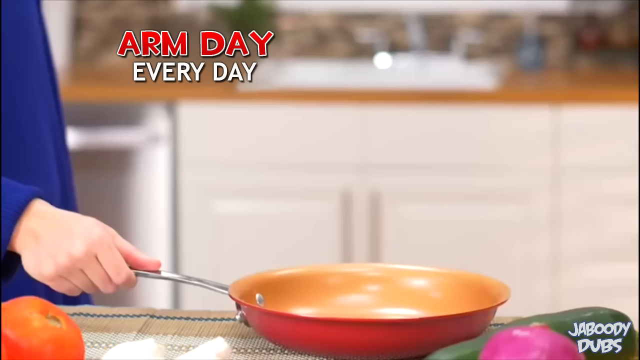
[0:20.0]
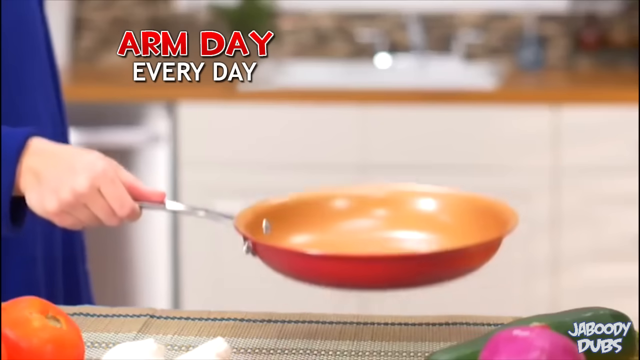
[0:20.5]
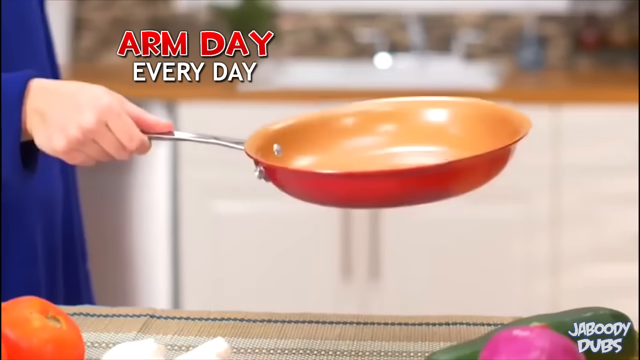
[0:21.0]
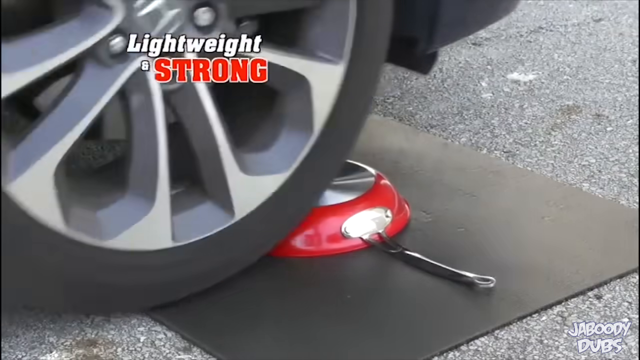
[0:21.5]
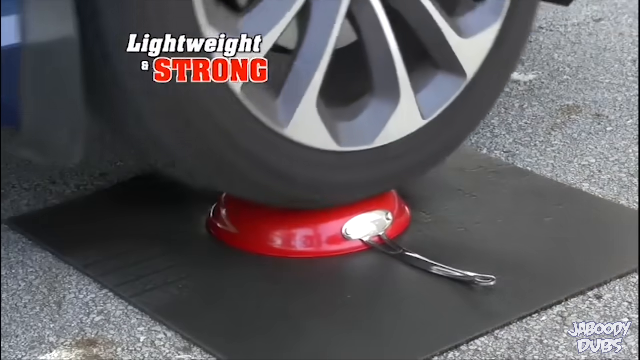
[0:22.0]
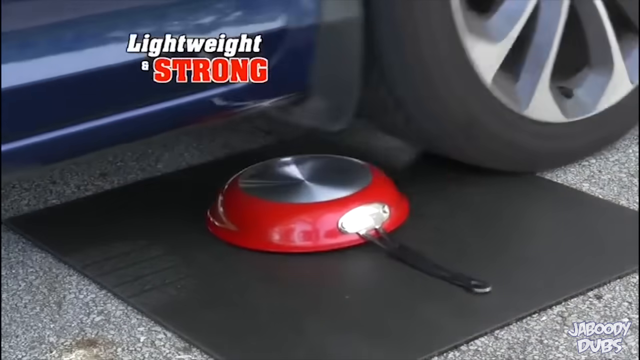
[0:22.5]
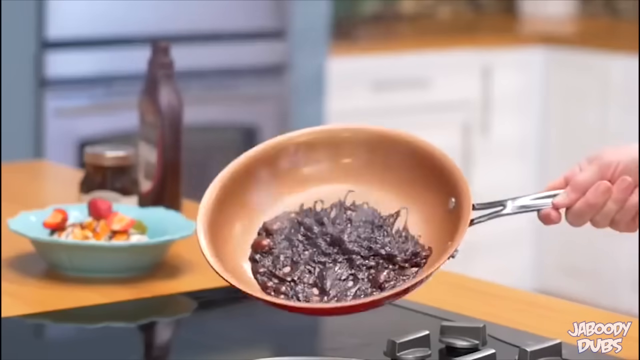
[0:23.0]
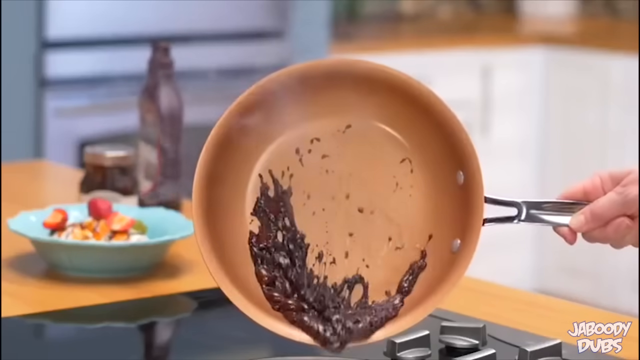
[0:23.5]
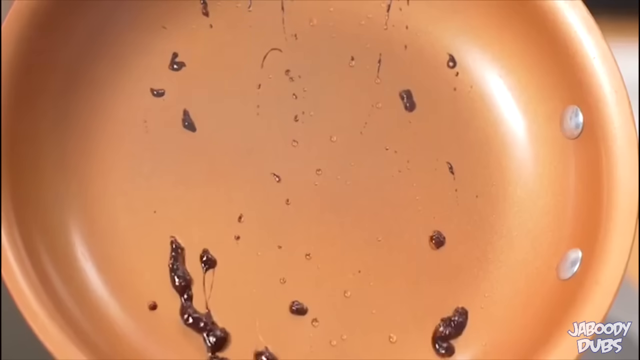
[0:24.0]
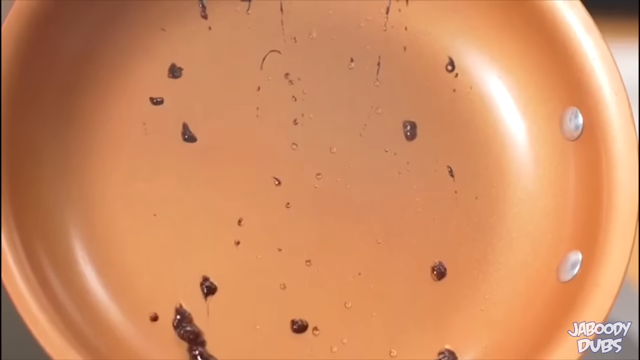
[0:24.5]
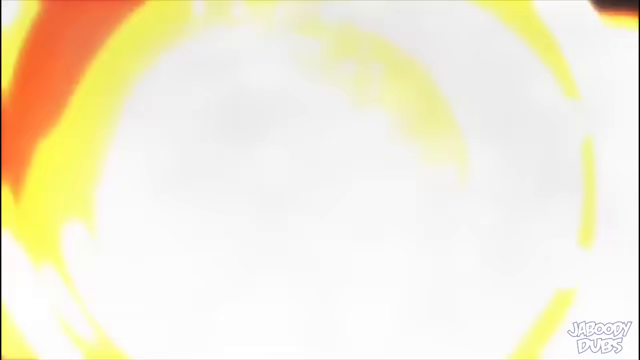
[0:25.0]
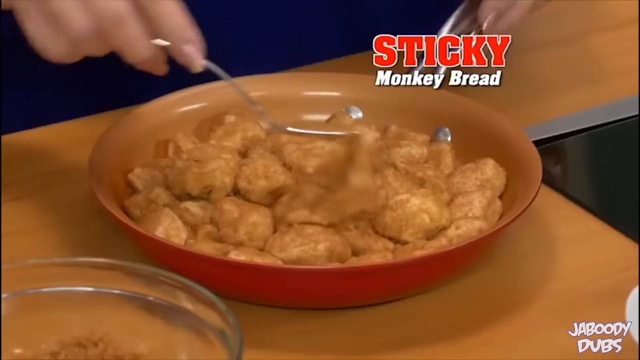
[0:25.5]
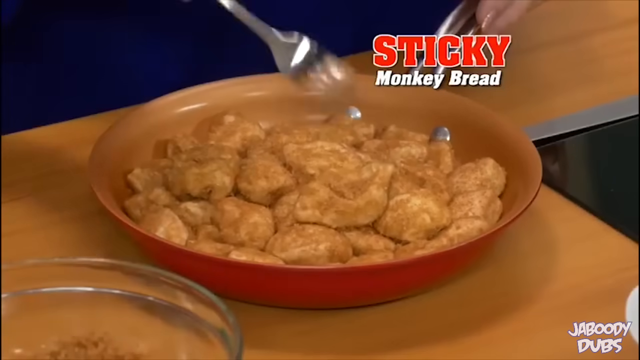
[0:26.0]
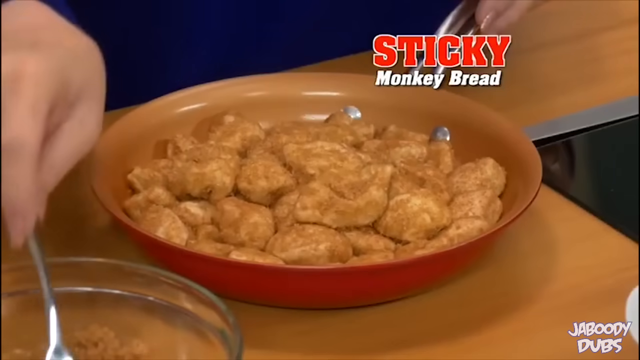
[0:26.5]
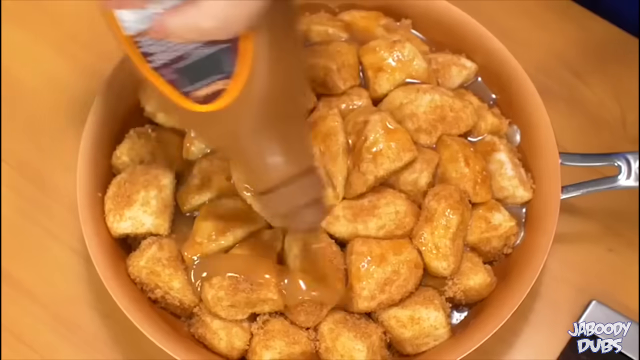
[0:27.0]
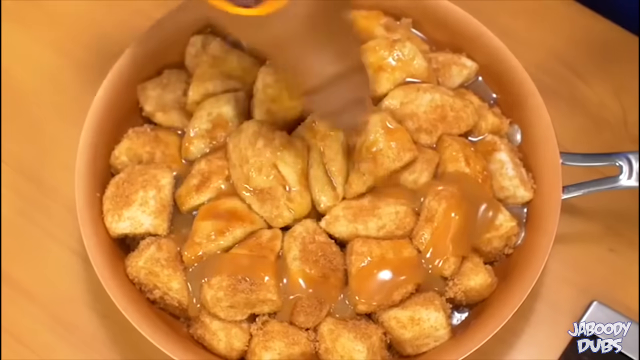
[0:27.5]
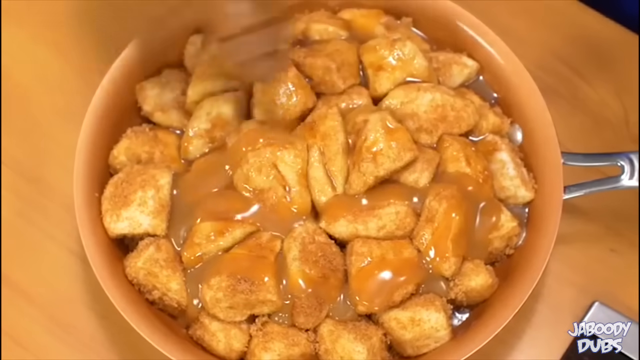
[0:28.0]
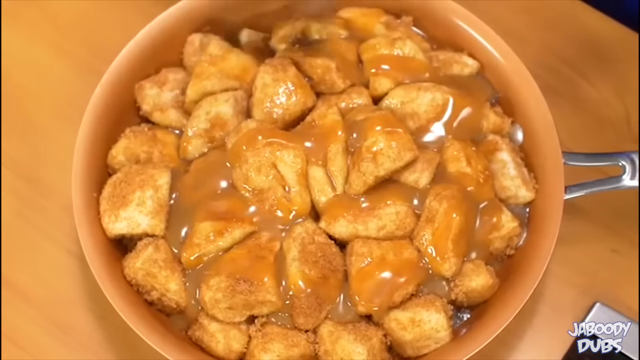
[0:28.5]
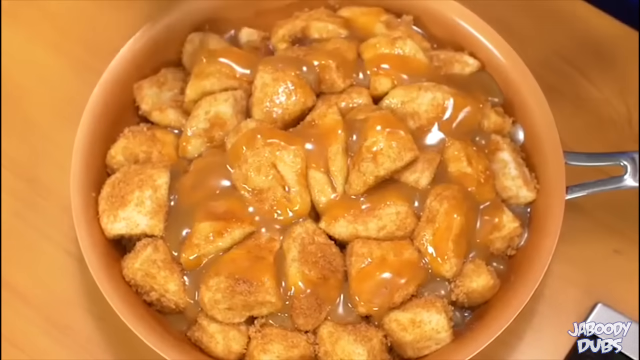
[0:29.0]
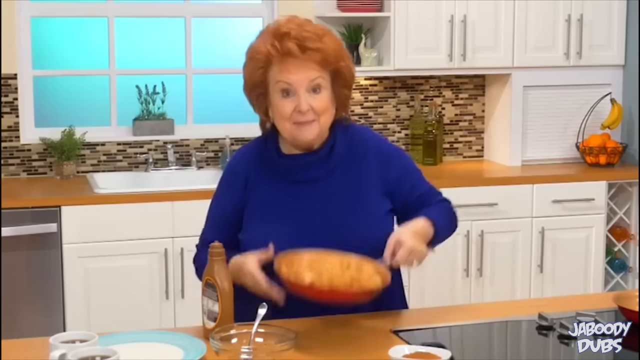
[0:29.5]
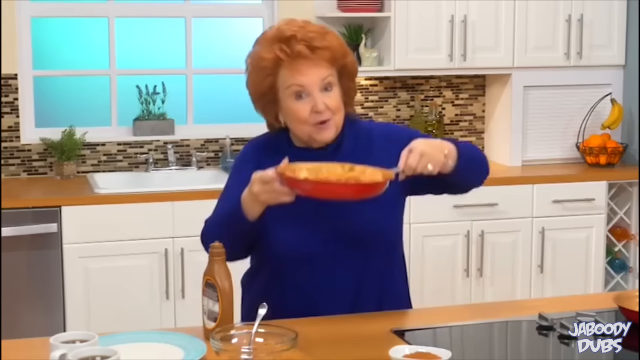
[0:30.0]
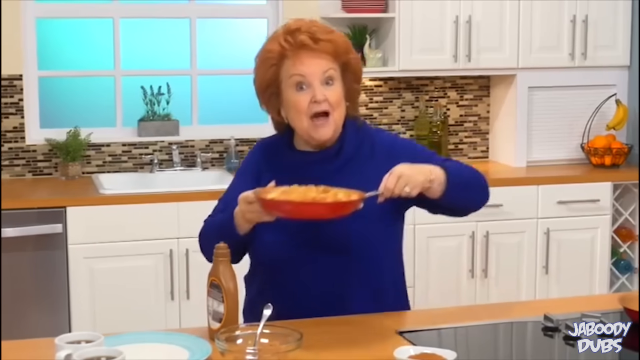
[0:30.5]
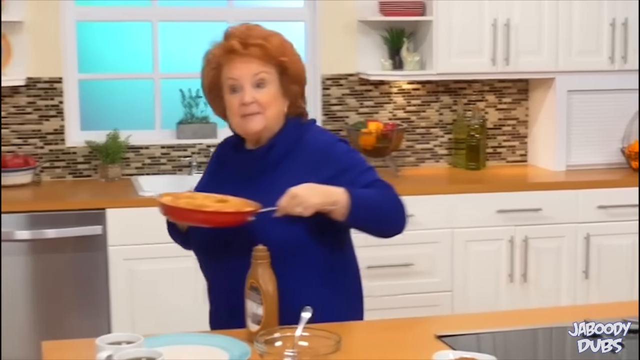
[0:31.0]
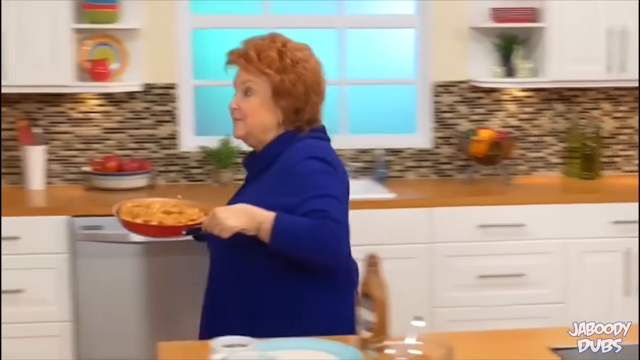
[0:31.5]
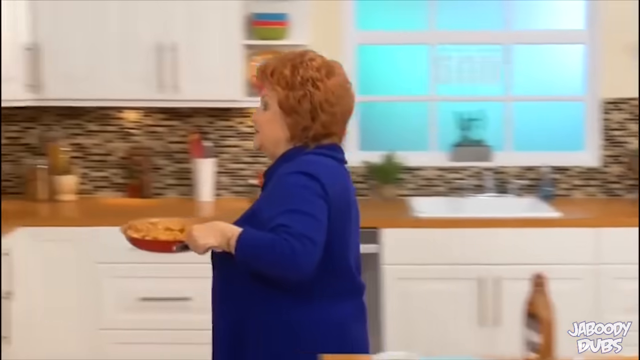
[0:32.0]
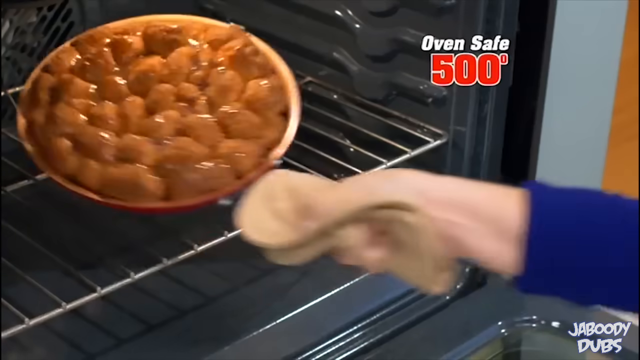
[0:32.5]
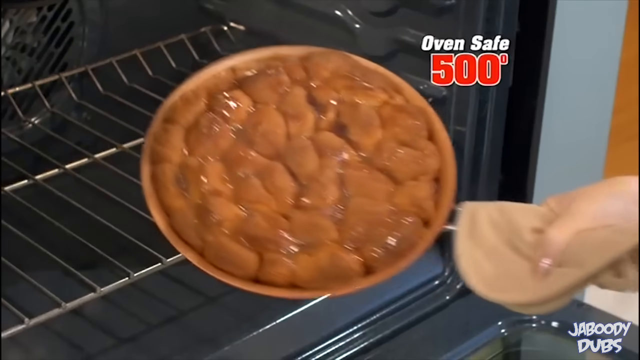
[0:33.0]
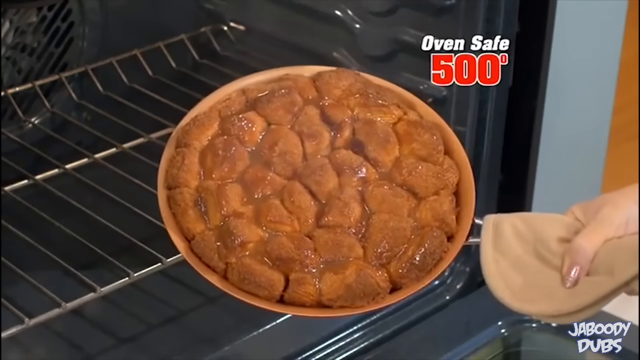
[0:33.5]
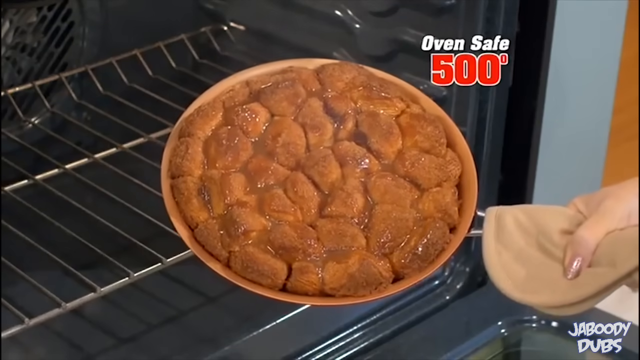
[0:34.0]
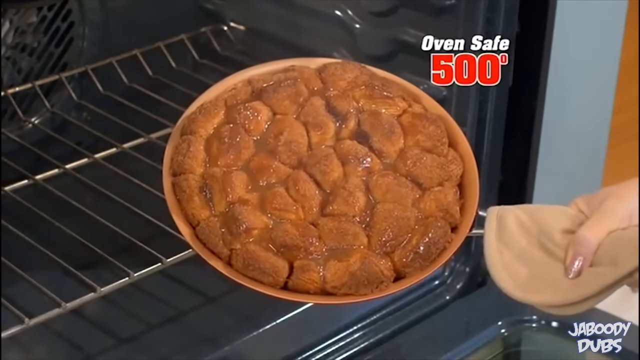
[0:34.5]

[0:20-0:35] A person holds up a skillet, and then a skillet on the floor is run over by a car. The video cuts to the same woman, with red hair and a blue sweater, holding the skillet. Beans are shown not sticking to it. Something that looks like chicken, or possibly some kind of bread, is put in the oven, and after syrup is added it does not stick to the skillet. The woman pulls the skillet out of the oven, holding it with some kind of towel. On-screen text says it is lightweight, and red letters state that it is not sticky, that it is oven safe and that it can handle at least 500 degrees.